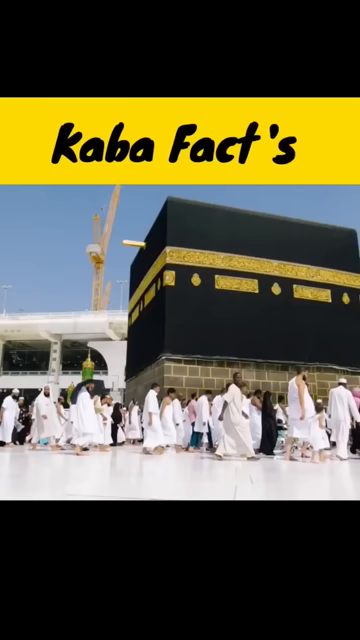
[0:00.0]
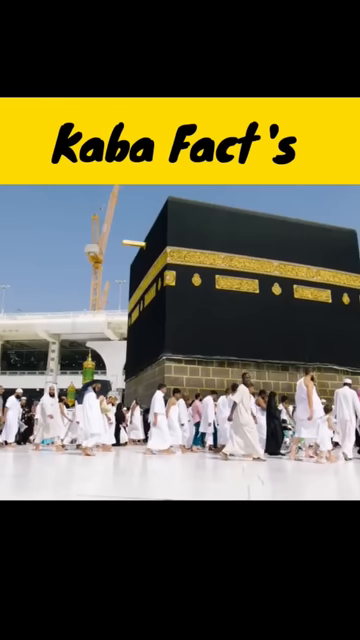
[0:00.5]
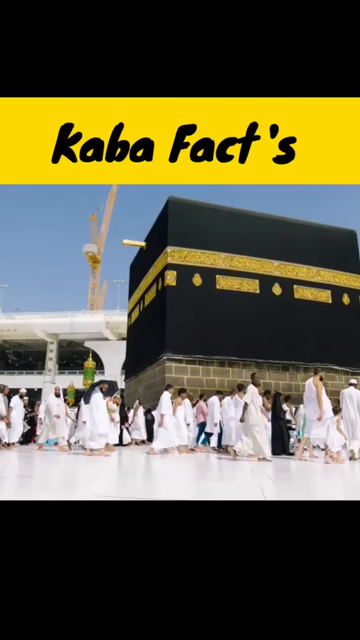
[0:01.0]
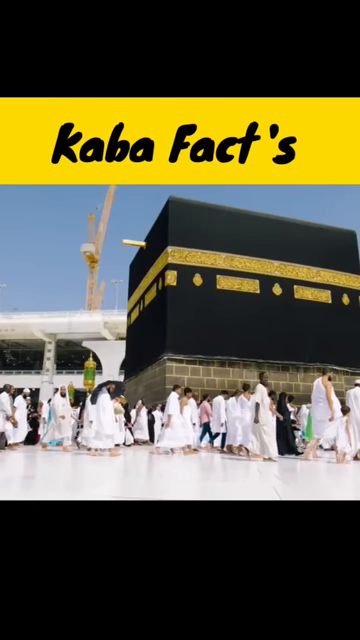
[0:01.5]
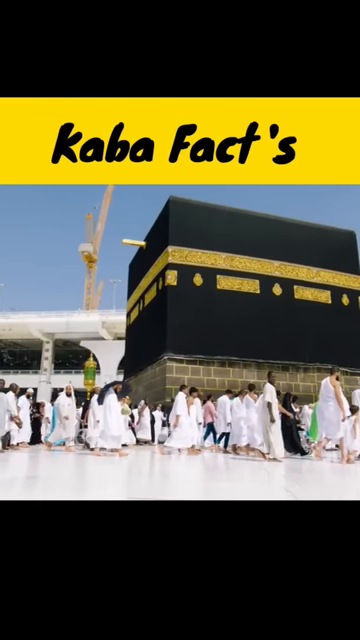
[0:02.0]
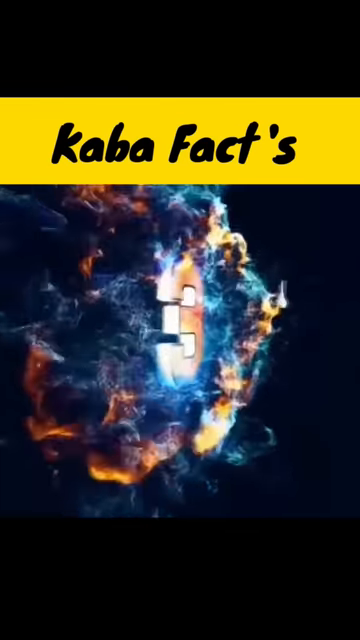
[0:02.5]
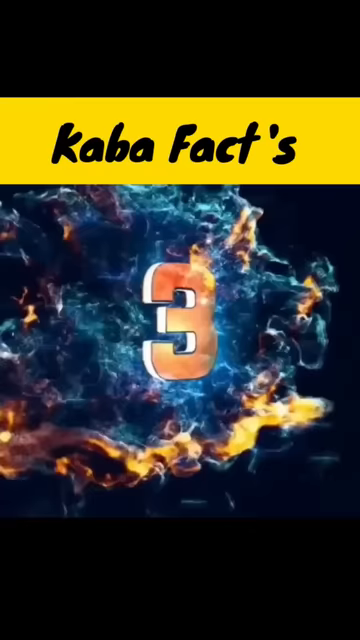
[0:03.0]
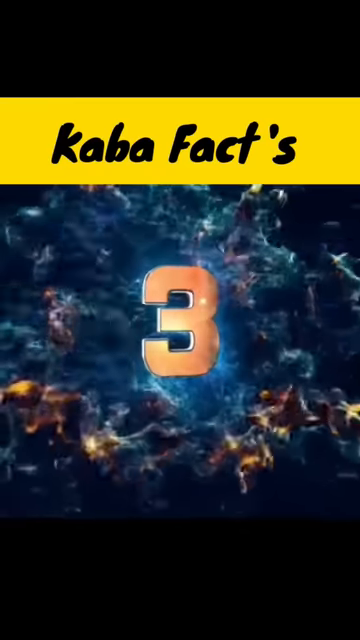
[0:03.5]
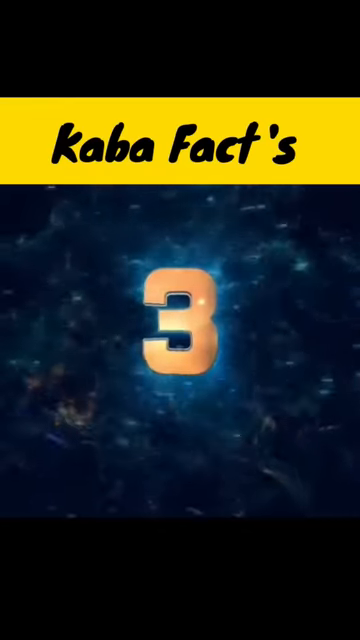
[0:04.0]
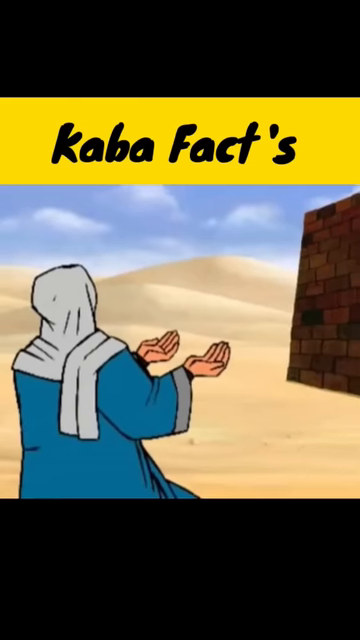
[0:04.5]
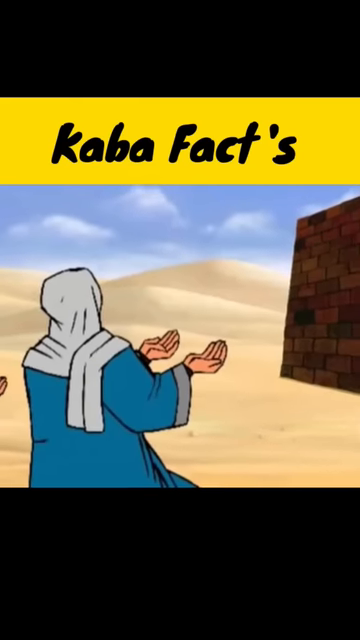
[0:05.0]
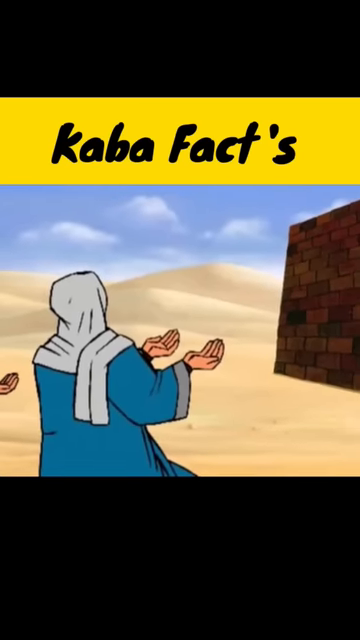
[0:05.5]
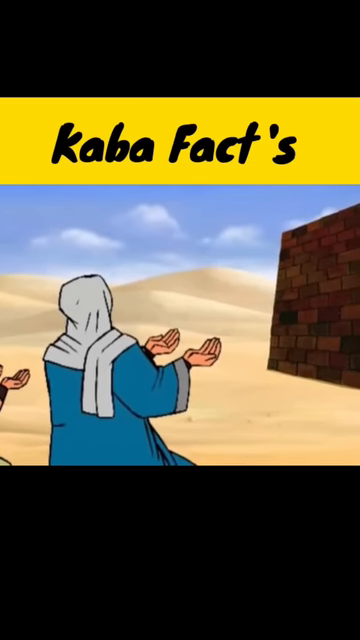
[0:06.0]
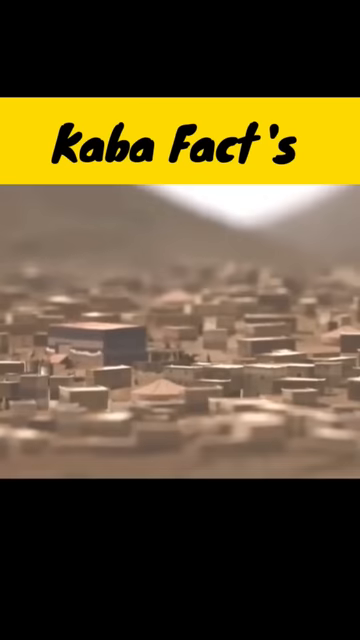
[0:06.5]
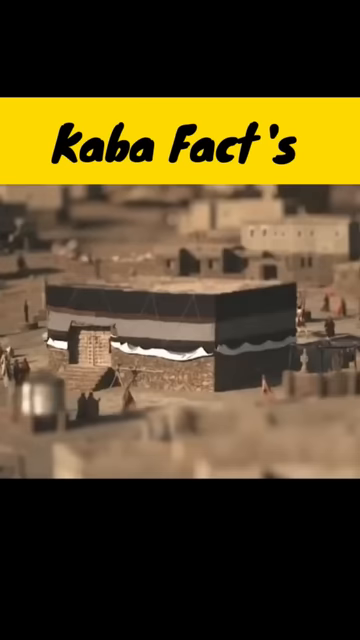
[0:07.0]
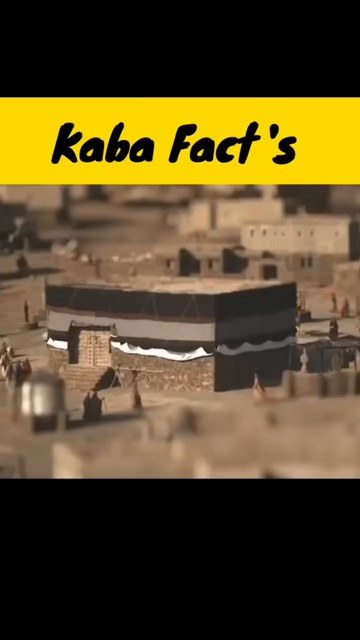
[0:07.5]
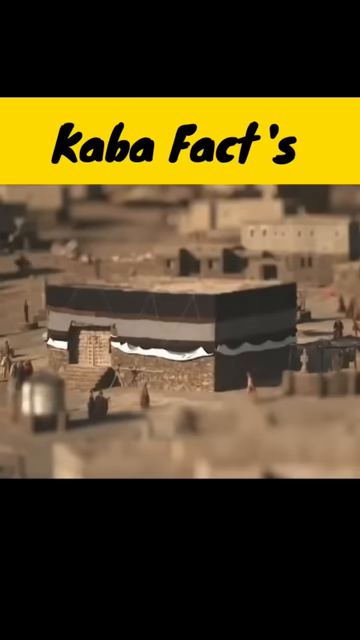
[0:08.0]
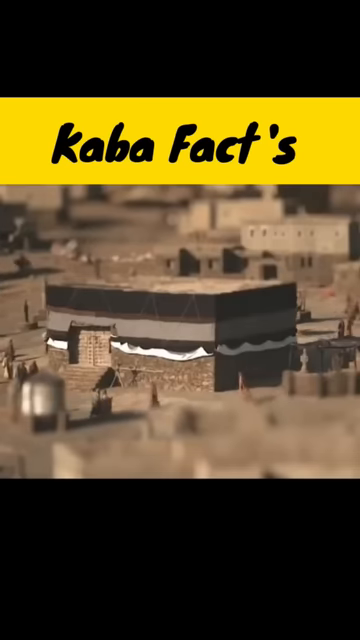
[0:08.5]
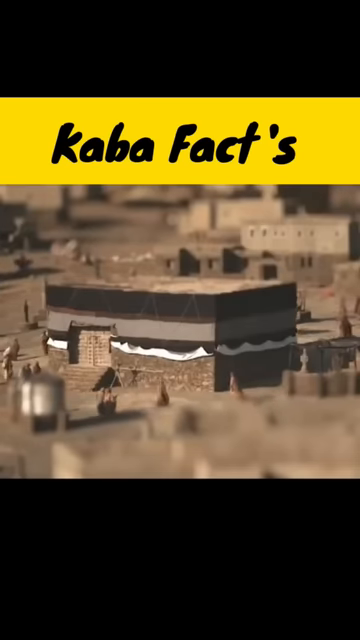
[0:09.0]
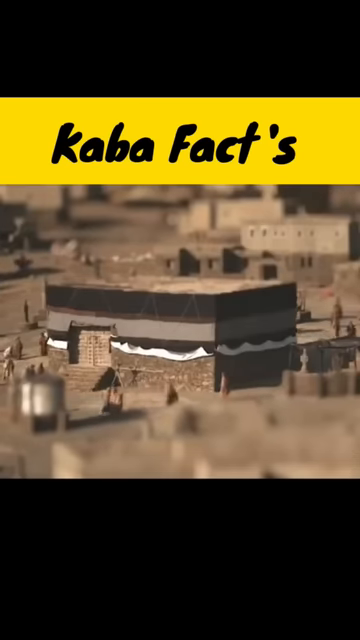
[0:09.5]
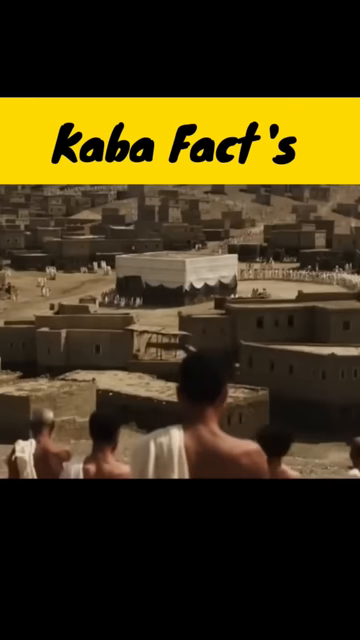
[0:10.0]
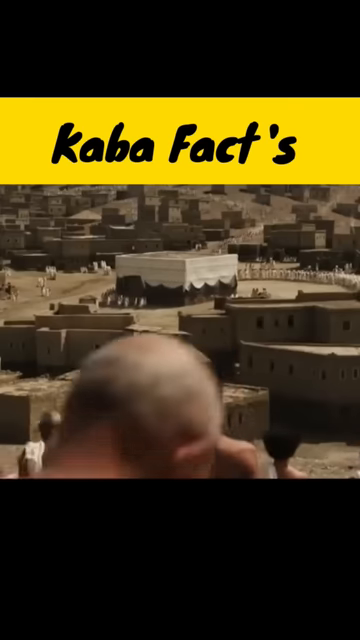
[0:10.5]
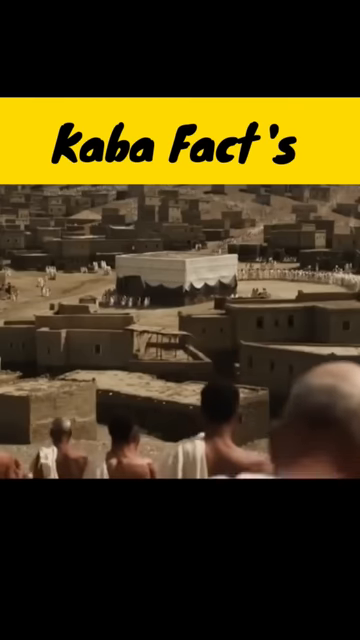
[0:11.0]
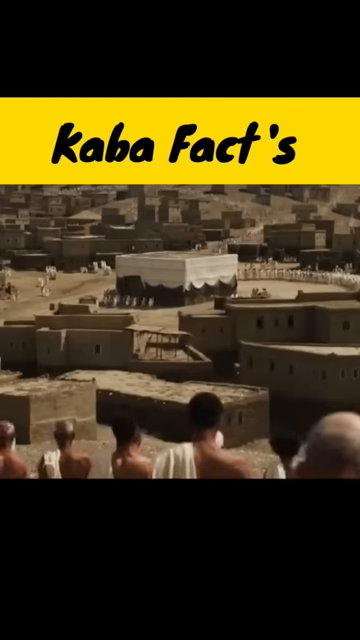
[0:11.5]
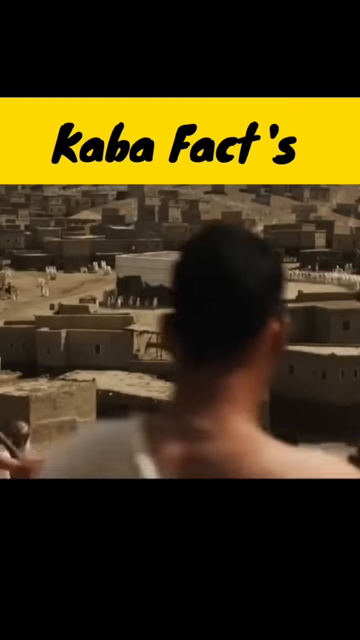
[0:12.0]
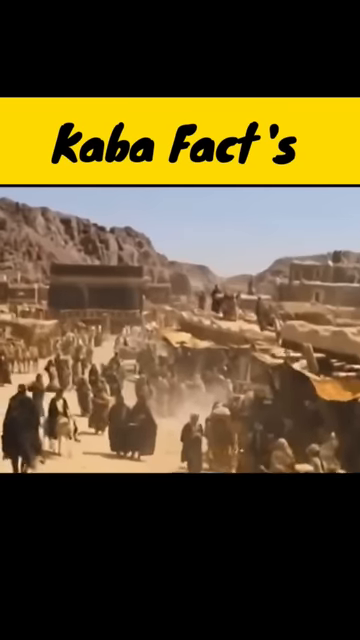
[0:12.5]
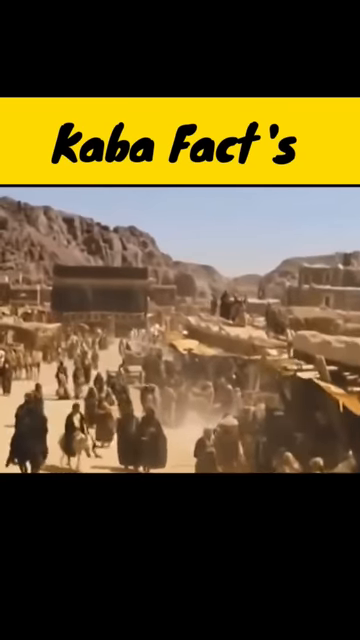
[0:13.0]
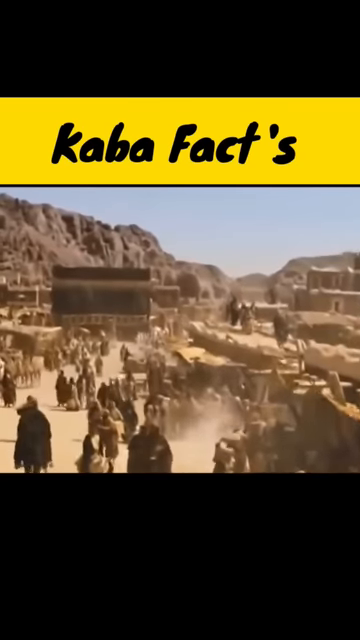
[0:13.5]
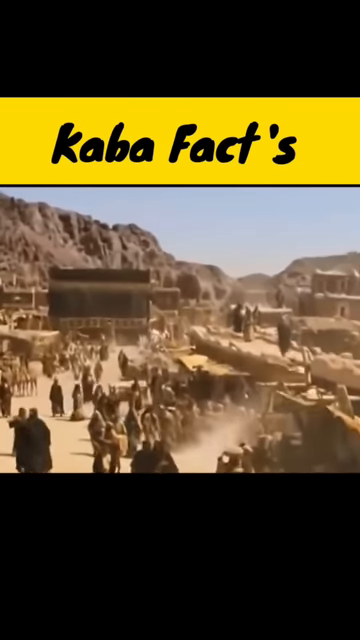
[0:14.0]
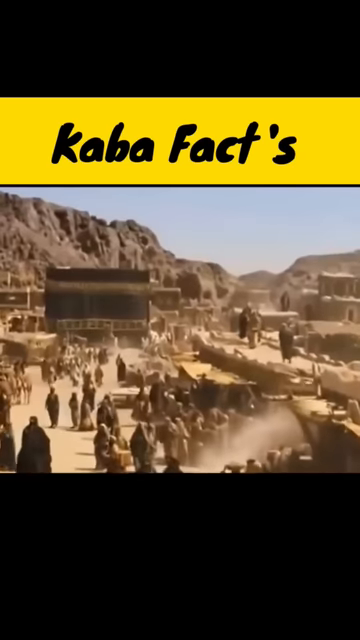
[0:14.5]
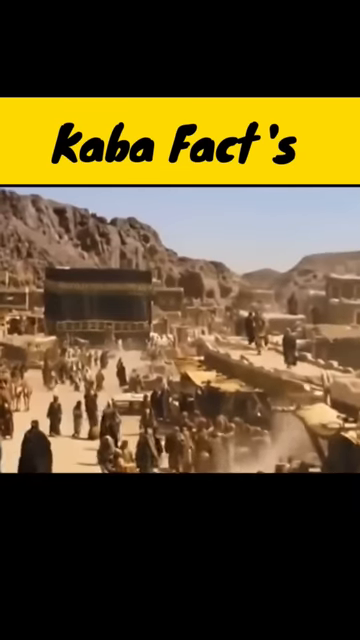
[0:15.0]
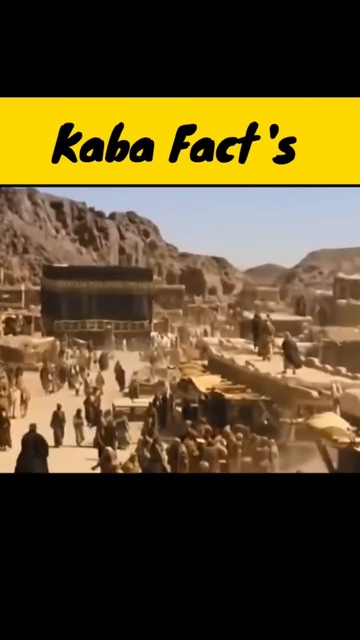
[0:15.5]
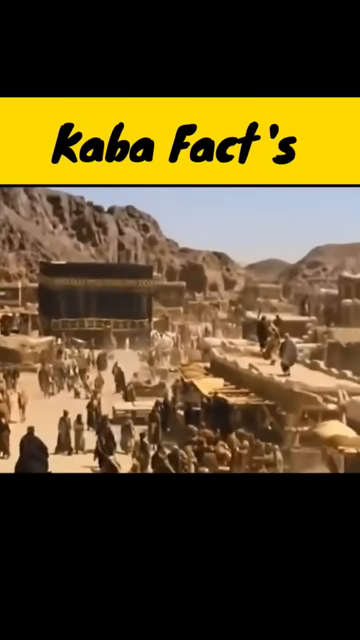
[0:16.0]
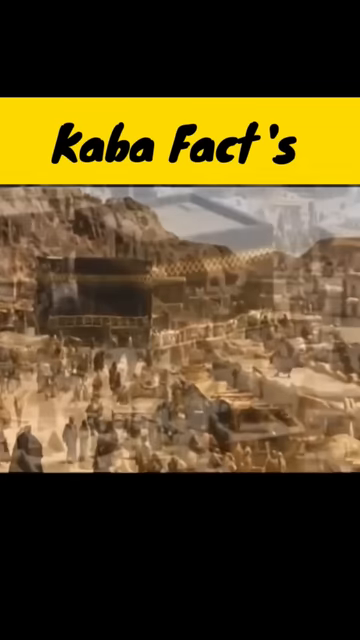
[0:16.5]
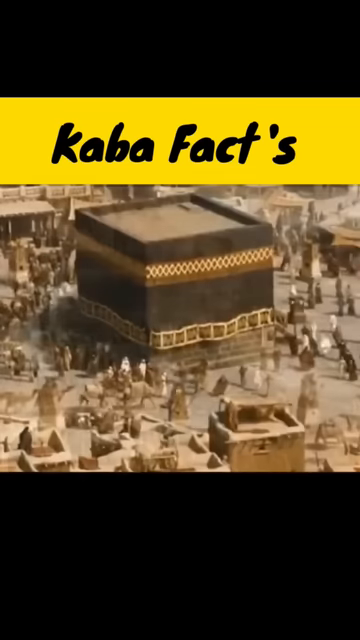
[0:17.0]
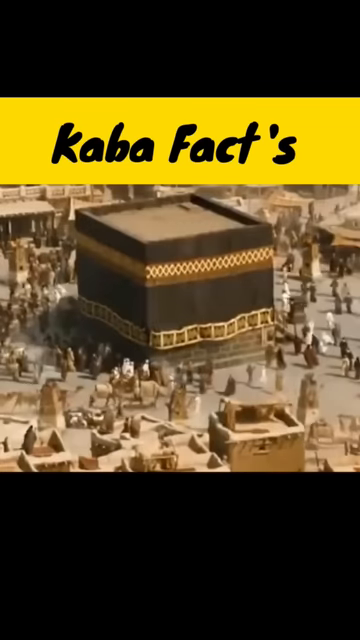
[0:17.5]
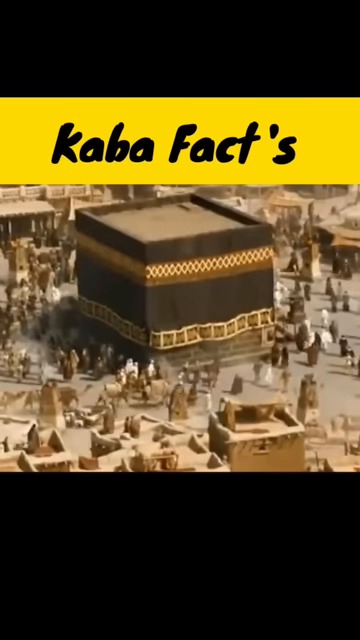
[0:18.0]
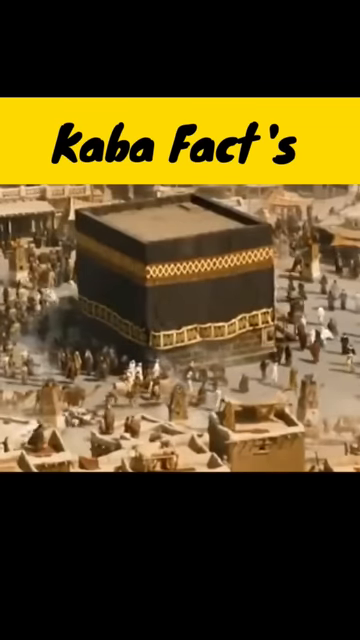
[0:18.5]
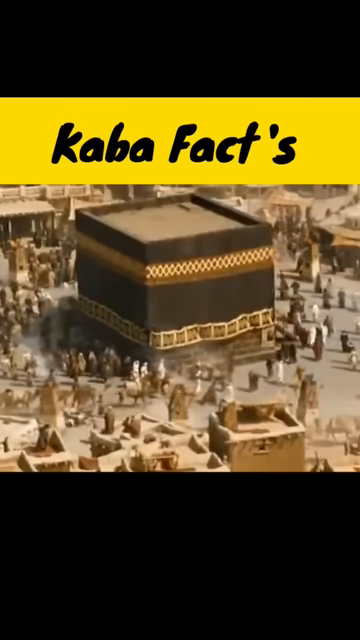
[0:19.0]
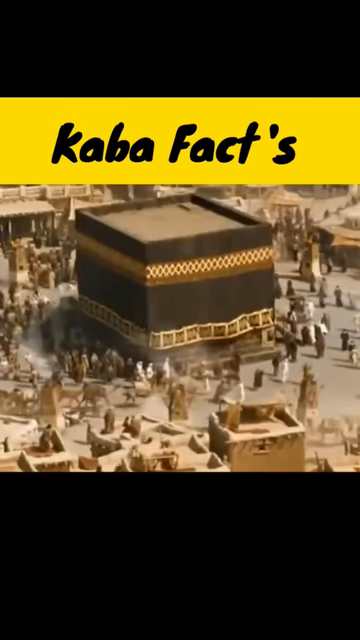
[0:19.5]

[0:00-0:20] The video begins with a small square in the center of the frame. A yellow banner runs across the top, coming down about one-fifth of the square, and inside the yellow it says "Kaba facts" in black. Underneath it, a video plays. There is black space of about two inches on the left and right sides and about an inch on the top and bottom. The first image shows people walking outside who almost look like monks; they are dressed in all white. It then cuts, apparently very quickly, to a part that says "Top three facts". After that it shows the people walking around outside, in front of something like a black building with gold. It flashes to kind of liquidy-looking blue water smoke with a three on it. Then it cuts to a person who is like a drawing, kneeling outside a monument, with the monument on the right side and blue sky visible. The person wears a blue outfit with a brown head wrap. Next comes an overlook of a city, with people walking around and concrete buildings everywhere. Then a large number of people walk down a dirt area, the dirt kicking up as they walk around the big square building that is black with gold trim. It then cuts to a white image that kind of looks like a commode, though this is uncertain.